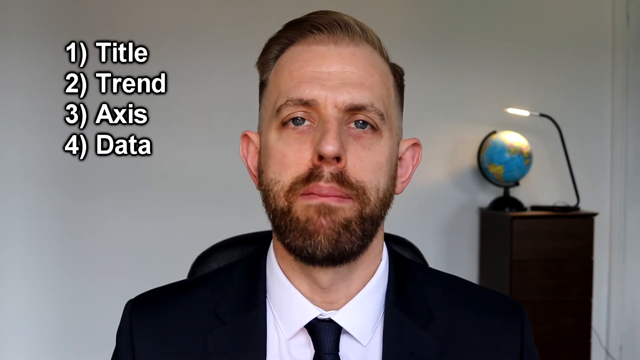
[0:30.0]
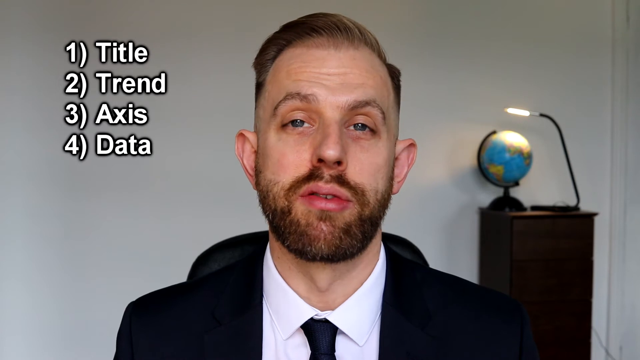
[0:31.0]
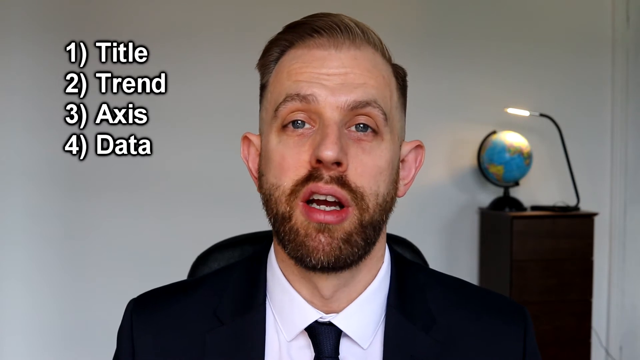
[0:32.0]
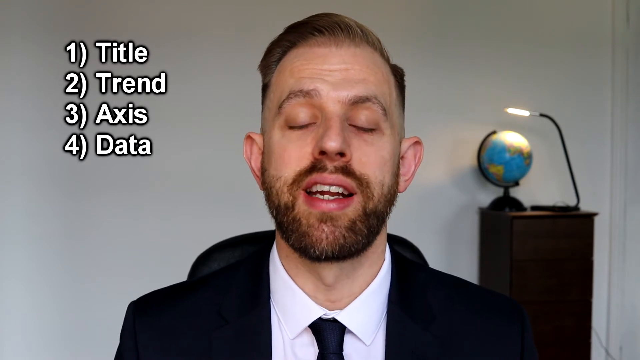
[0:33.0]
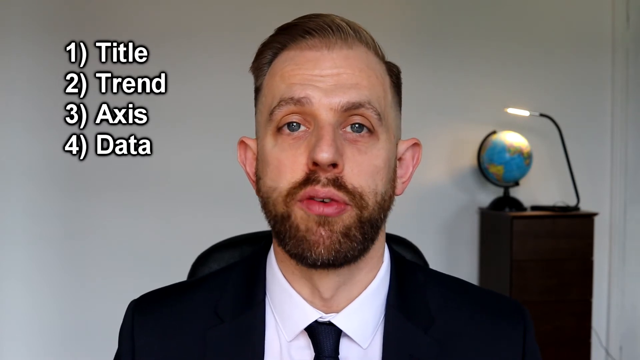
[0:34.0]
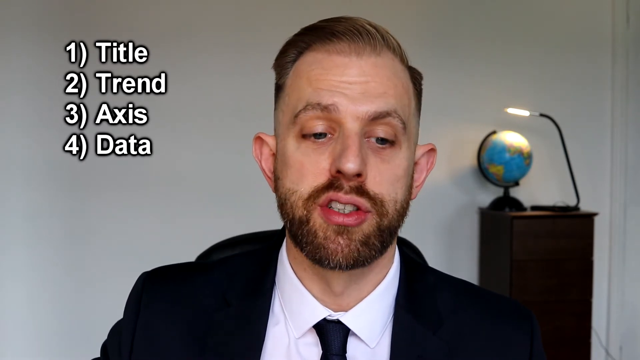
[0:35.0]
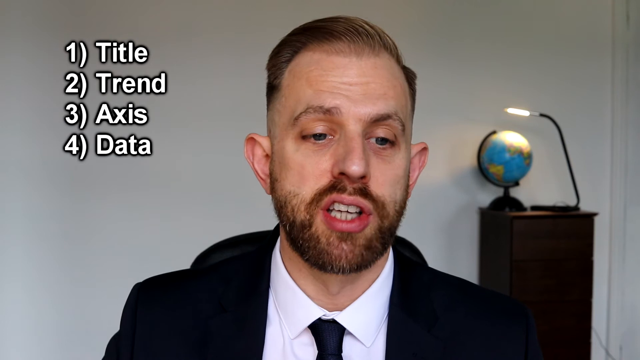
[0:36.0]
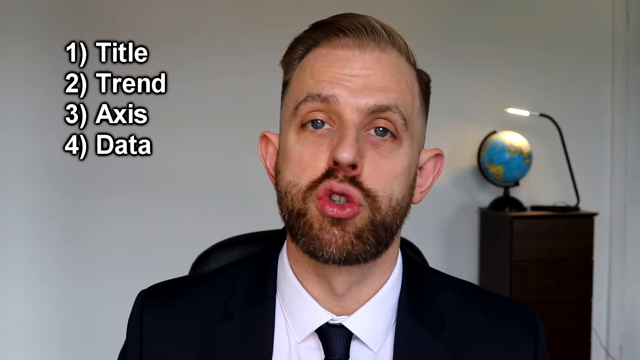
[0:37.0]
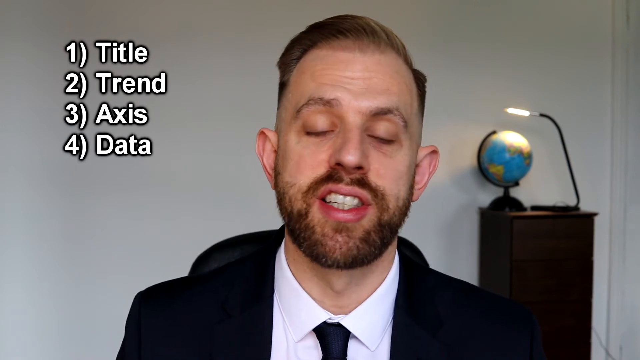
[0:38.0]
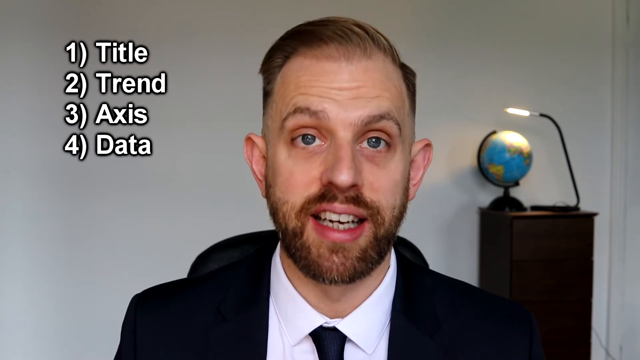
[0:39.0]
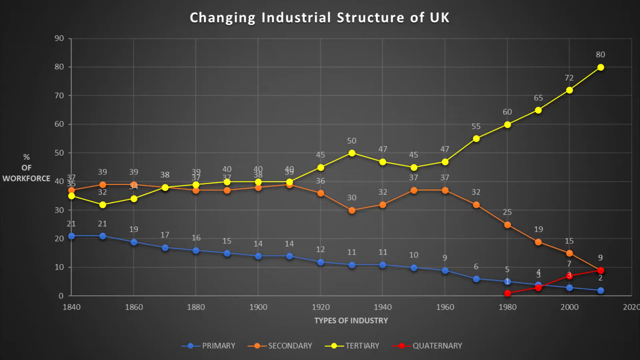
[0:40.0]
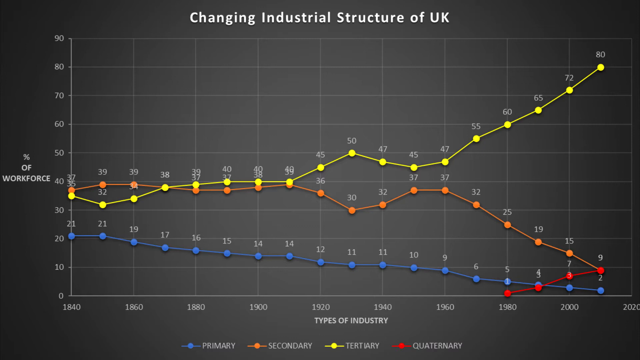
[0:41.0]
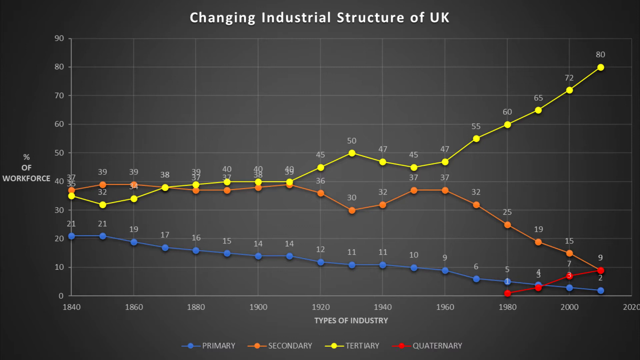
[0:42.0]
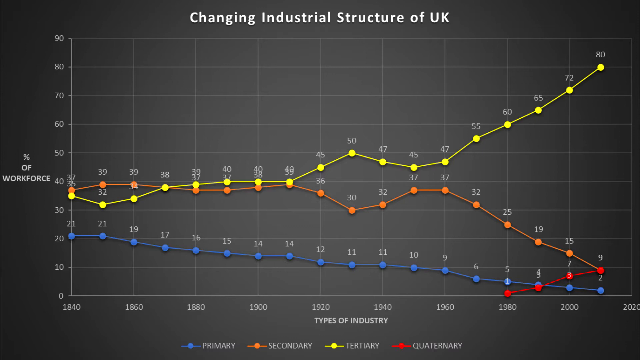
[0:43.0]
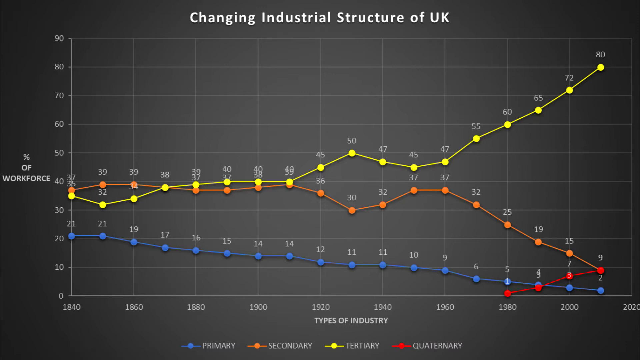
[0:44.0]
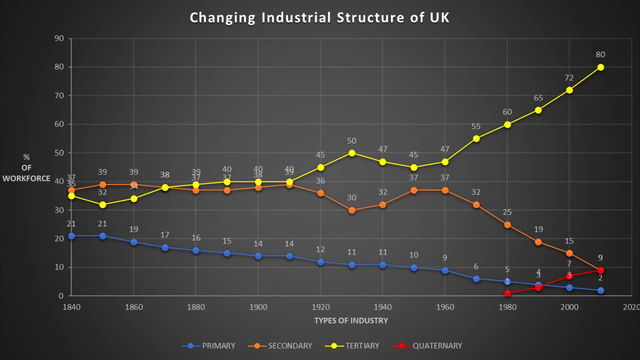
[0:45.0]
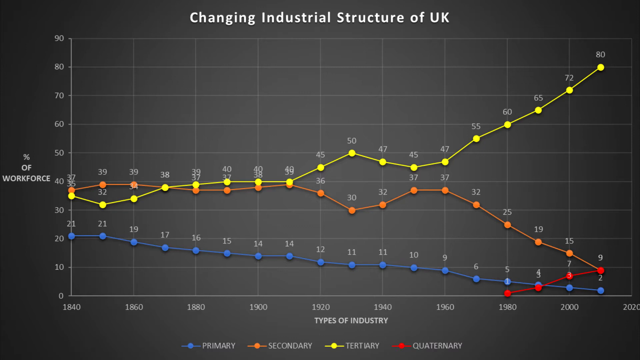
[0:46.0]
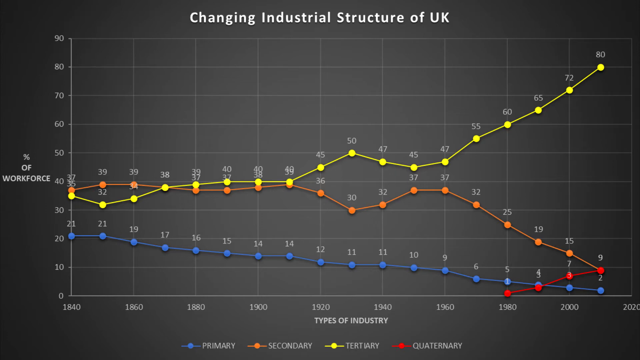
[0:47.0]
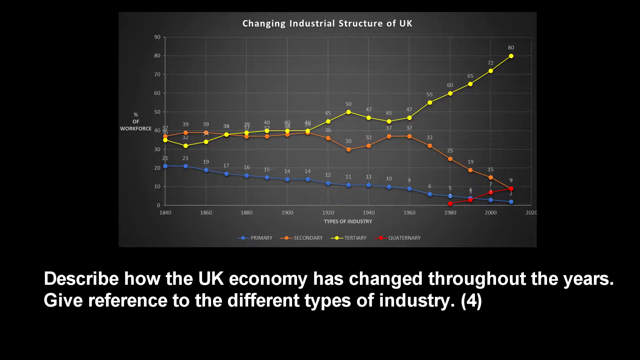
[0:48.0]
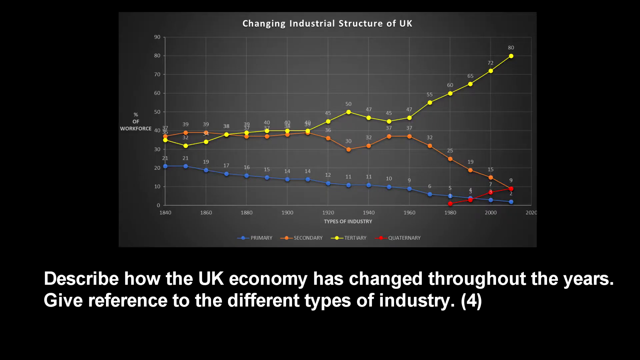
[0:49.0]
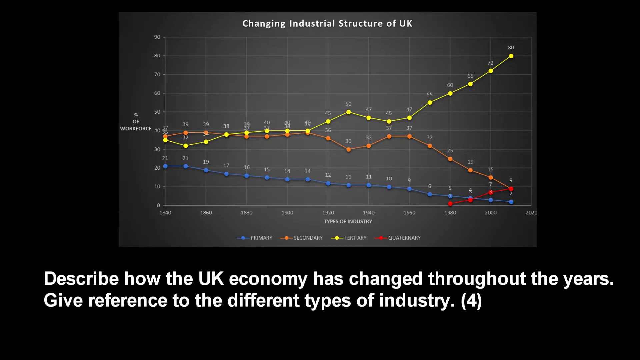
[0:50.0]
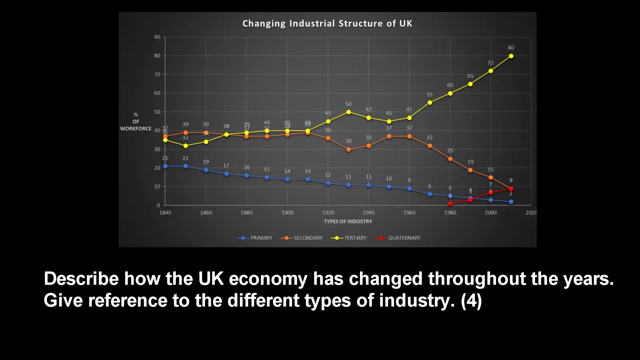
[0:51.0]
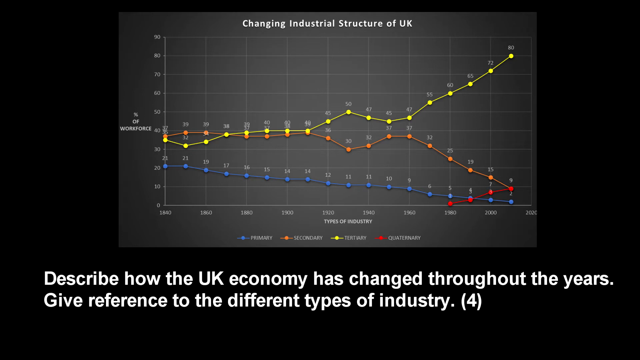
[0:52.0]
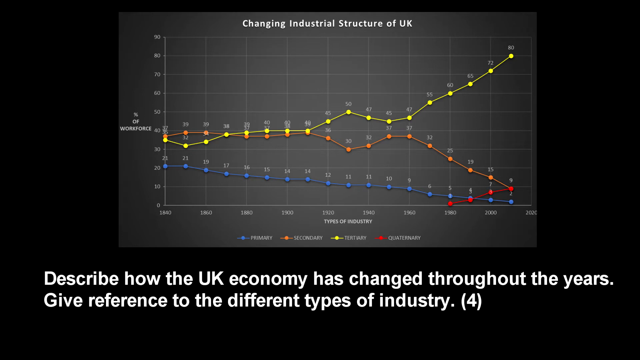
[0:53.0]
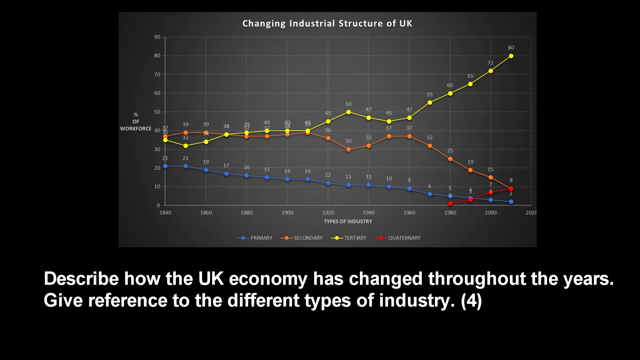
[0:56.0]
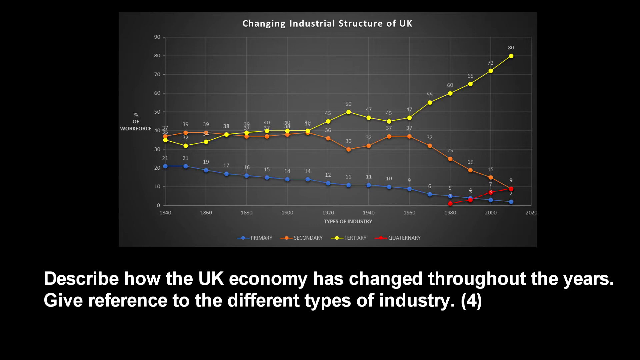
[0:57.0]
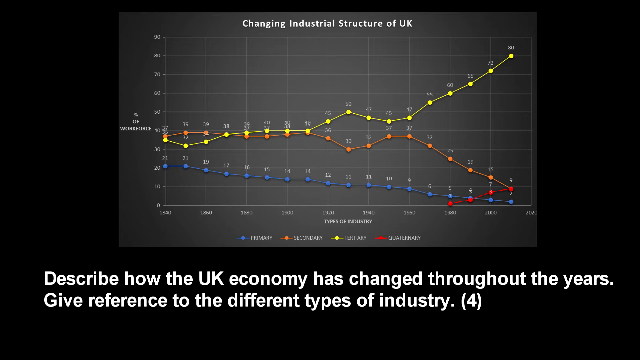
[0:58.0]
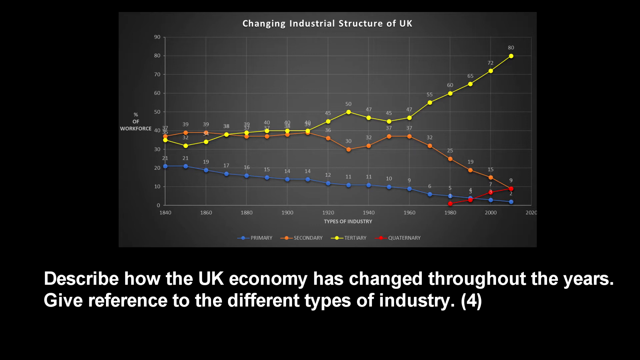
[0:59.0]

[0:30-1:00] On the diagram, the yellow line rises slowly and is at the top by the end of the year. The red line shows industries falling. By the end of the year the blue line is slowly dropping, staying at a lower level, unlike the industry that rises by the middle of the year. Another industry is indicated by a dotted line with yellow dots.